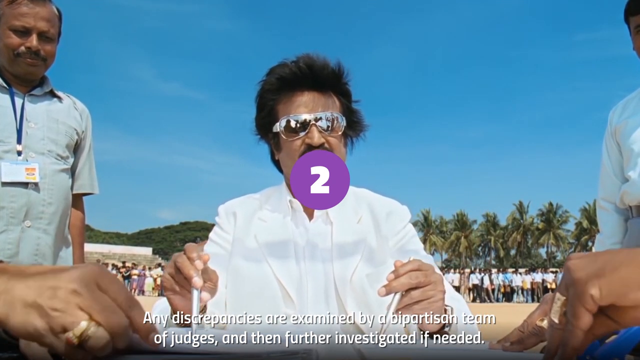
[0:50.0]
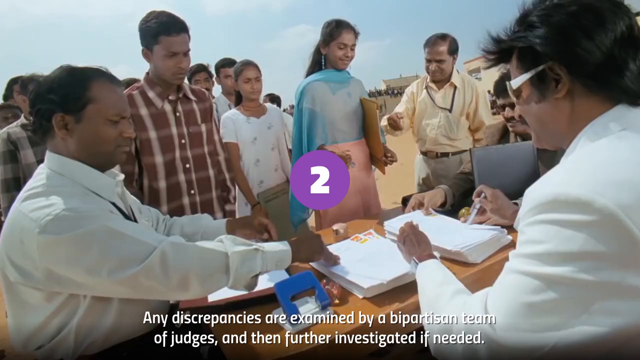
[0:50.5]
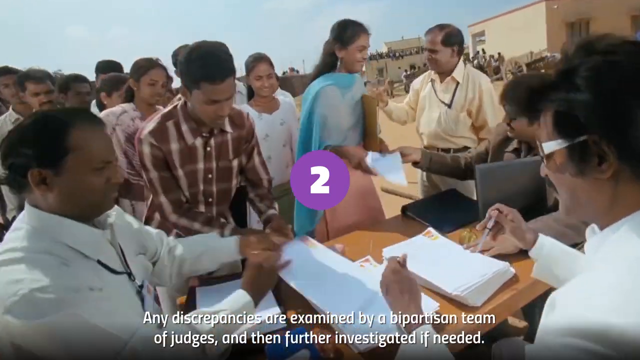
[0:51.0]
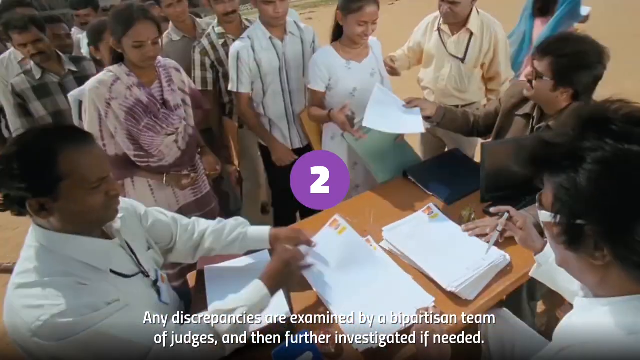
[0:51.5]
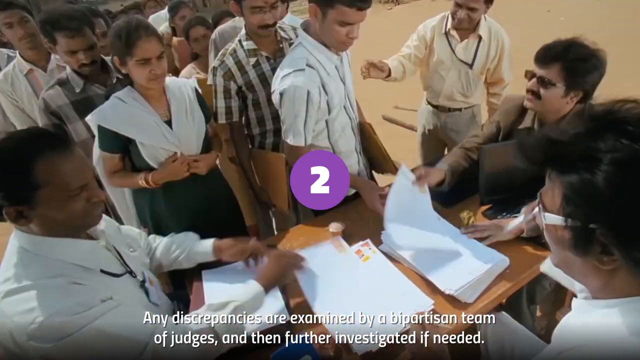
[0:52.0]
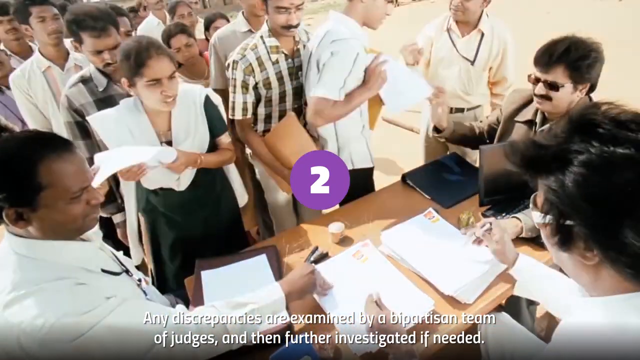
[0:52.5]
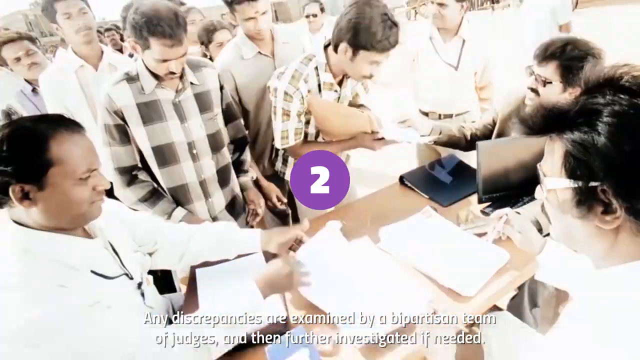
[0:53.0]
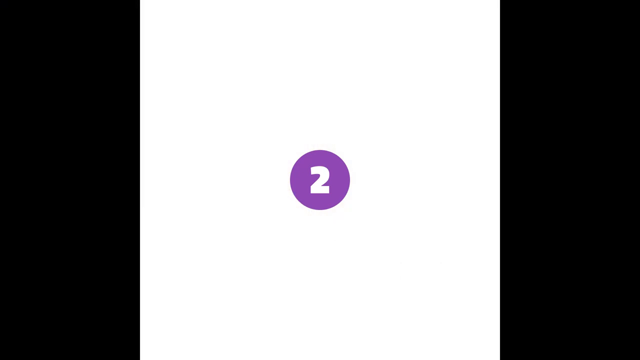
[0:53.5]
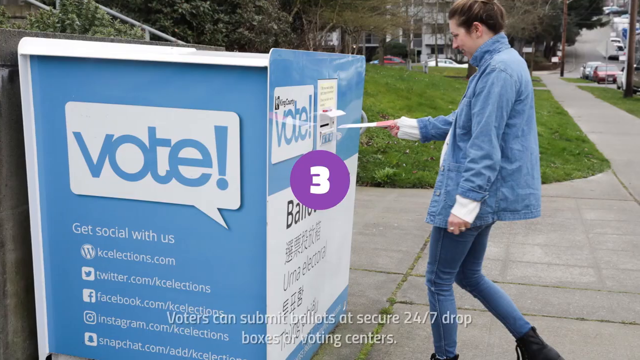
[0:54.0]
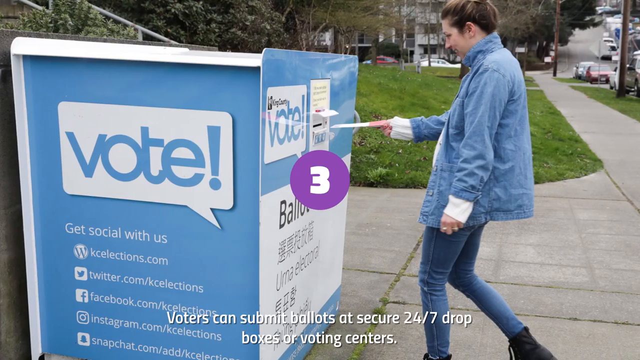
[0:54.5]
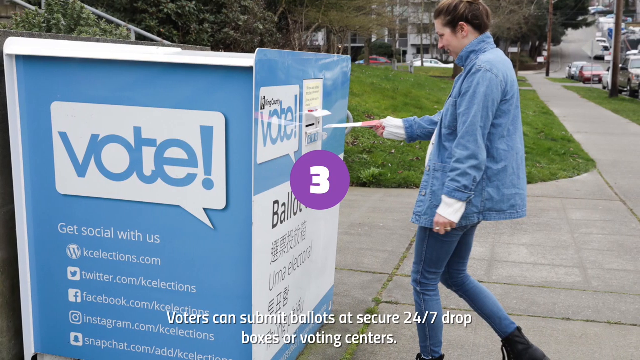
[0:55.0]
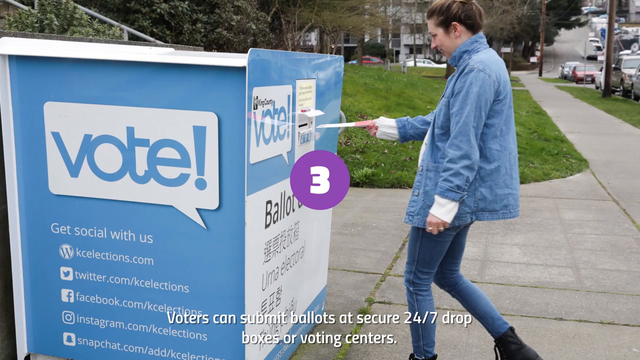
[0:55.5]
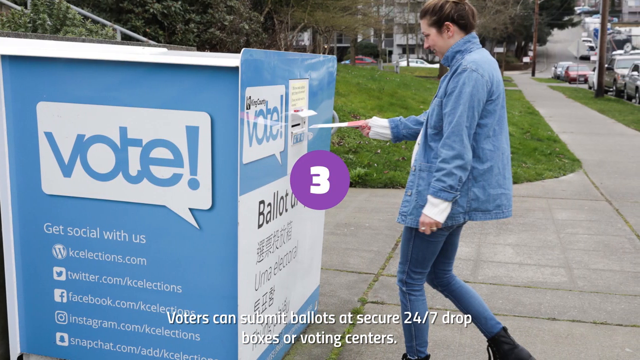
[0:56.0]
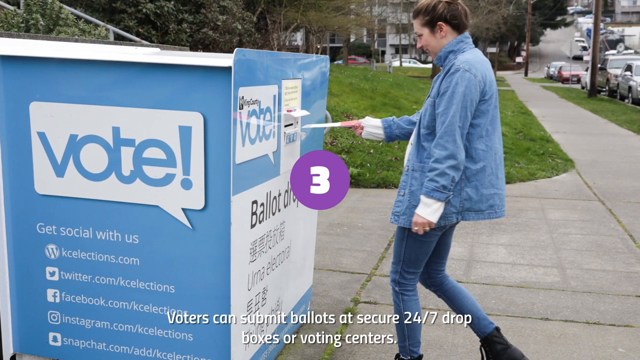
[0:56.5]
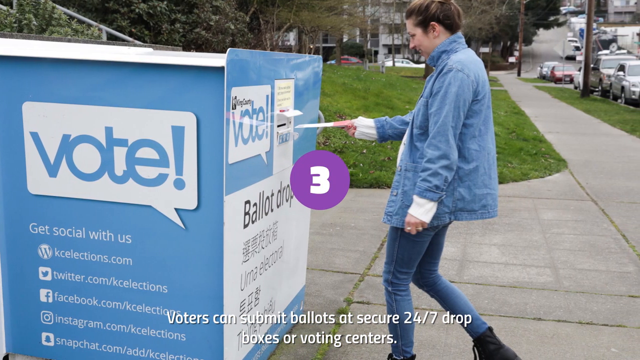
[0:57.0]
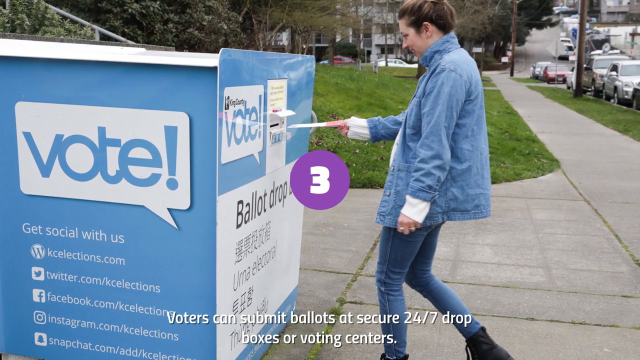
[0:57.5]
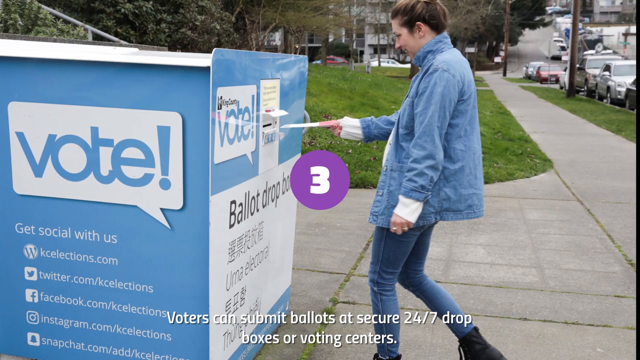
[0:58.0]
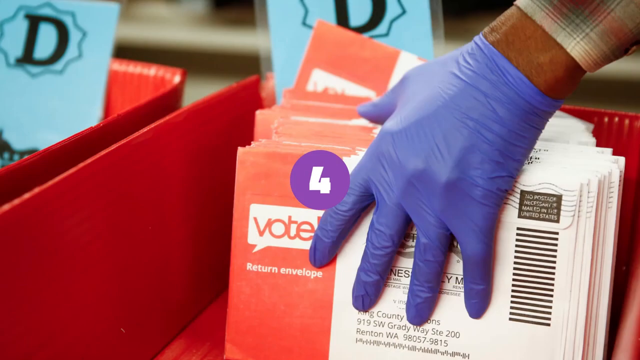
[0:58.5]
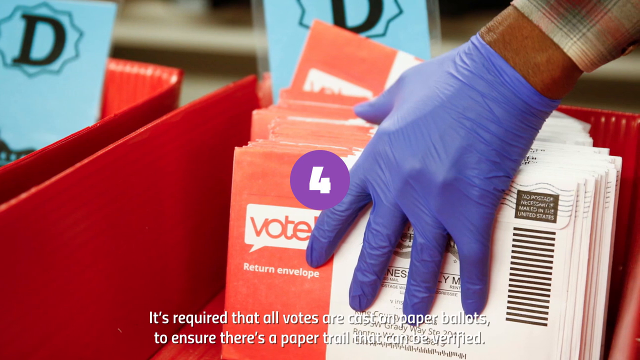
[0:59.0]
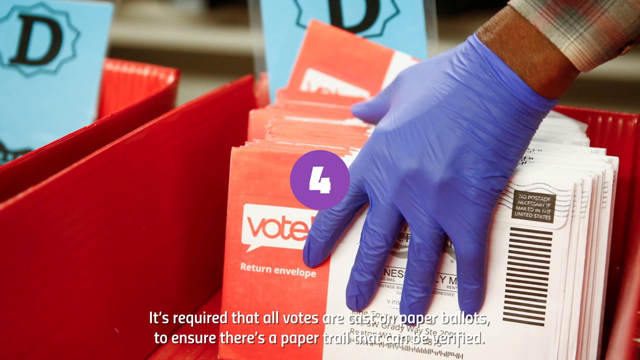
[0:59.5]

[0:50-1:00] People are casting their votes. A man with red hair and blue trousers holds a ballot. The setting appears to be an open space. A group of adults is also seen.